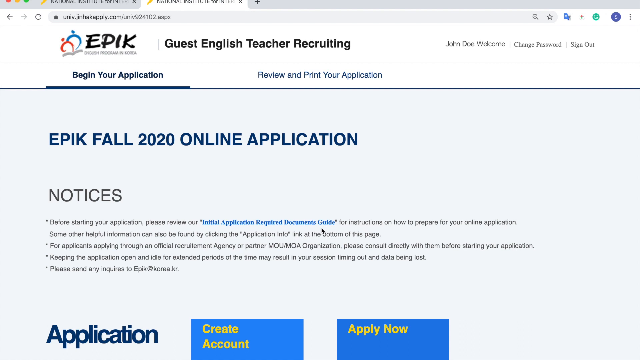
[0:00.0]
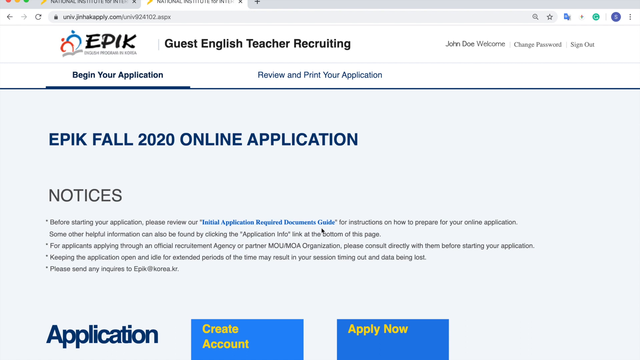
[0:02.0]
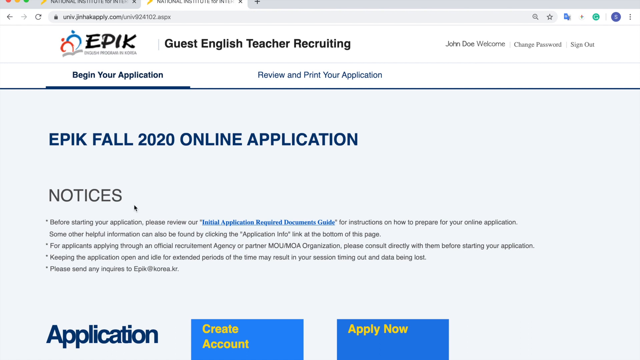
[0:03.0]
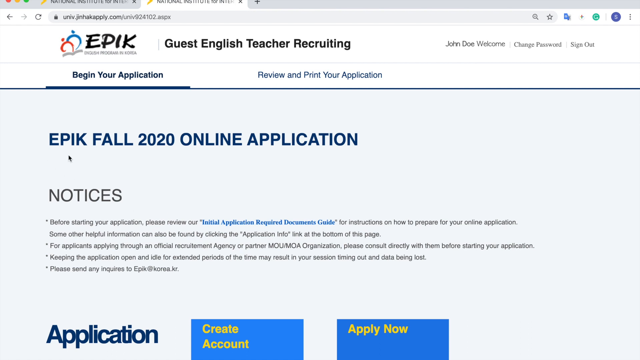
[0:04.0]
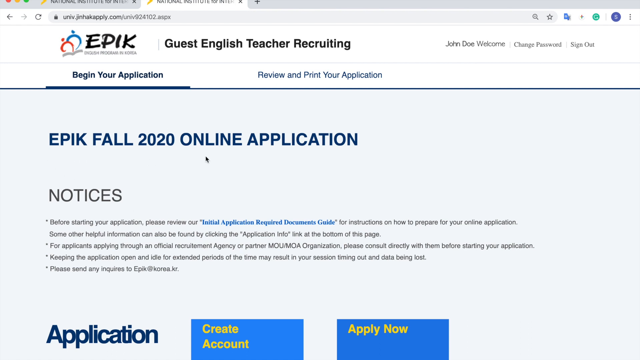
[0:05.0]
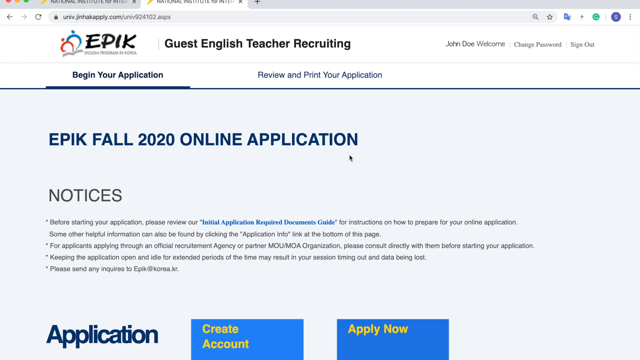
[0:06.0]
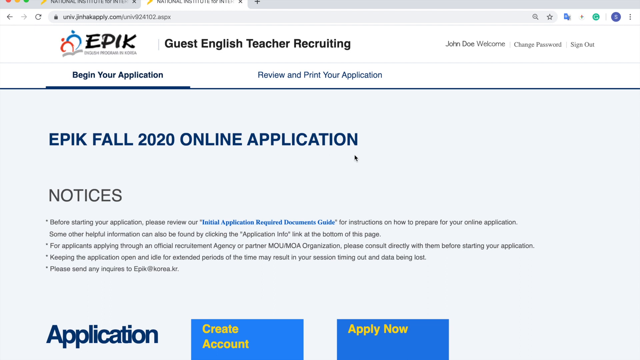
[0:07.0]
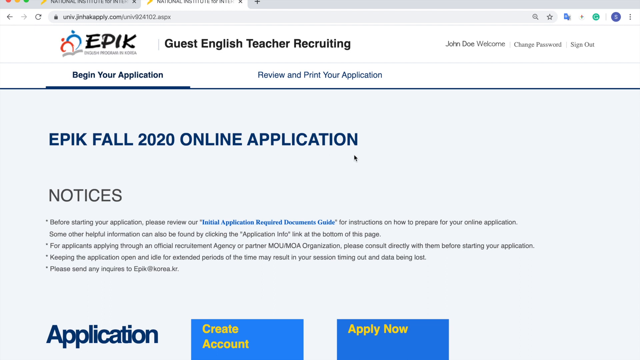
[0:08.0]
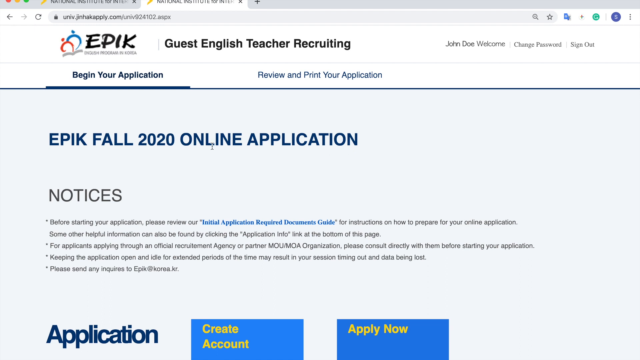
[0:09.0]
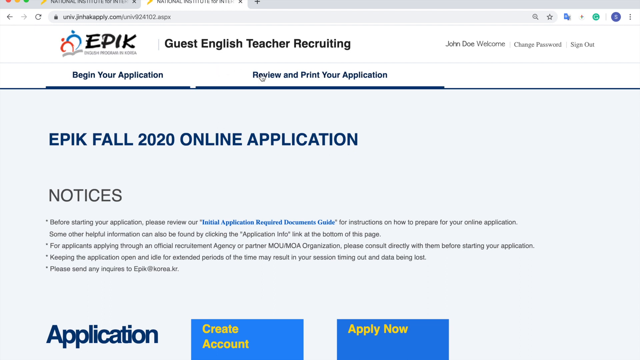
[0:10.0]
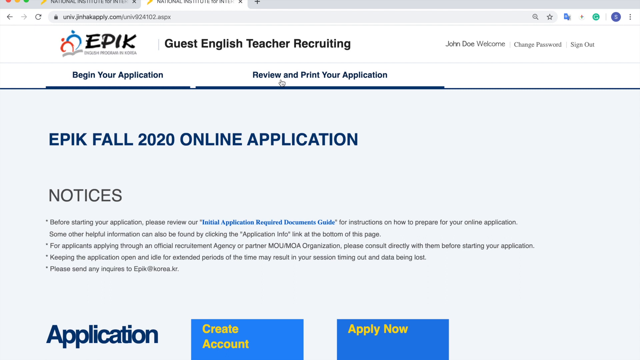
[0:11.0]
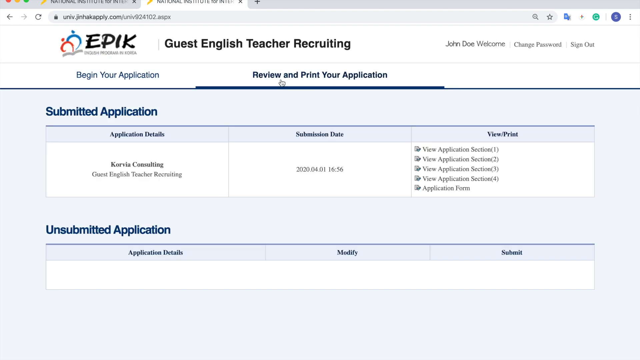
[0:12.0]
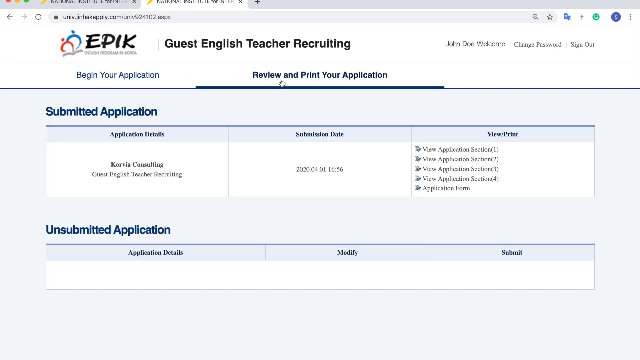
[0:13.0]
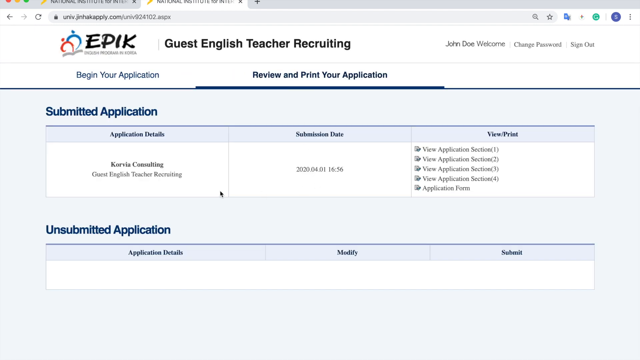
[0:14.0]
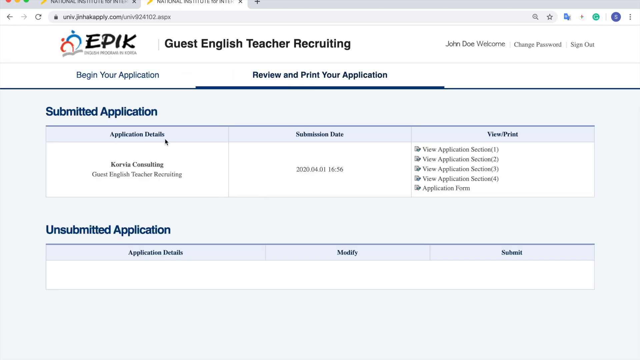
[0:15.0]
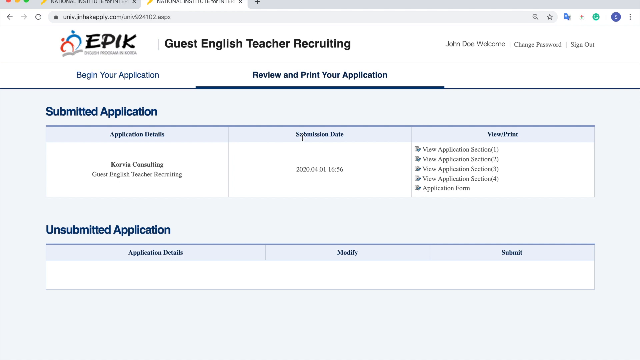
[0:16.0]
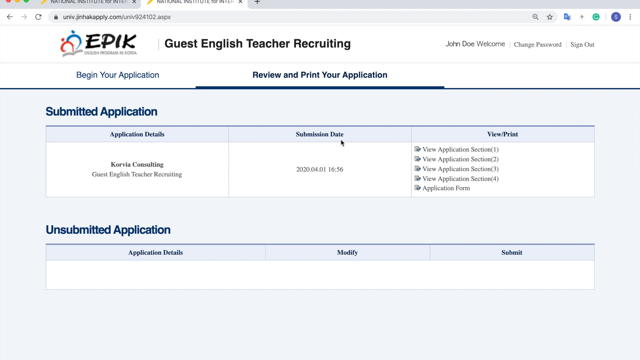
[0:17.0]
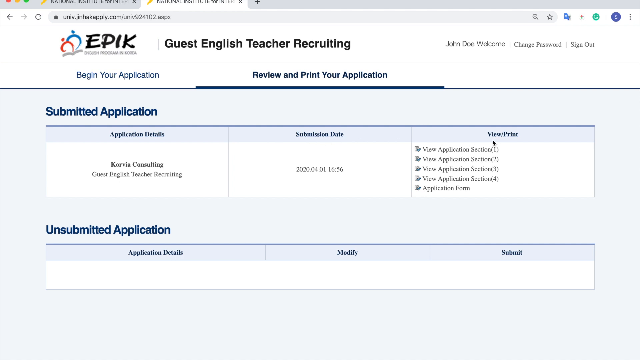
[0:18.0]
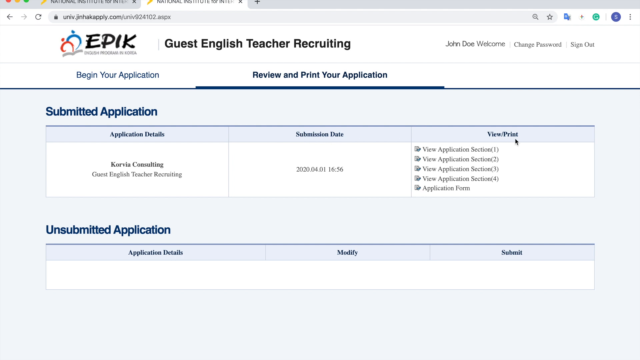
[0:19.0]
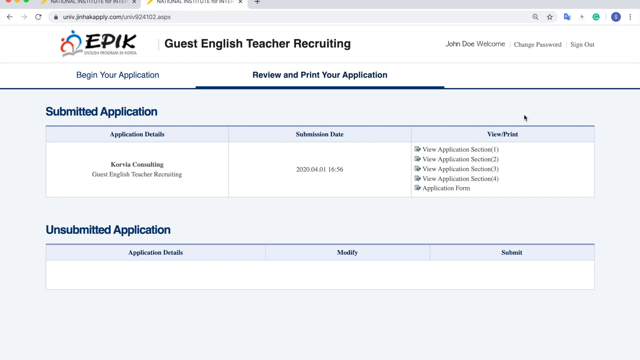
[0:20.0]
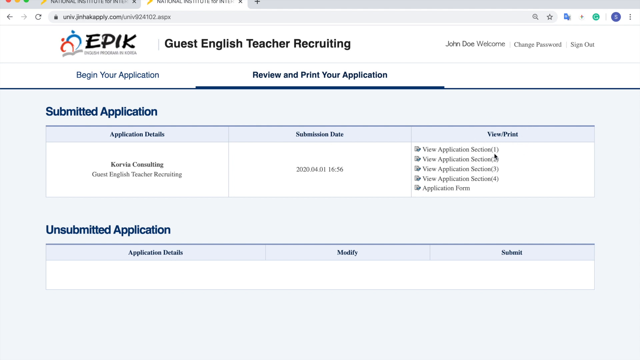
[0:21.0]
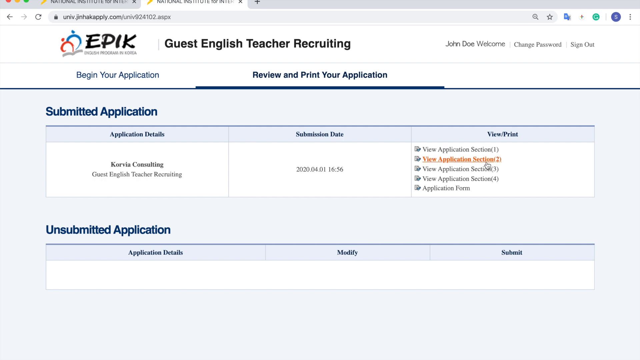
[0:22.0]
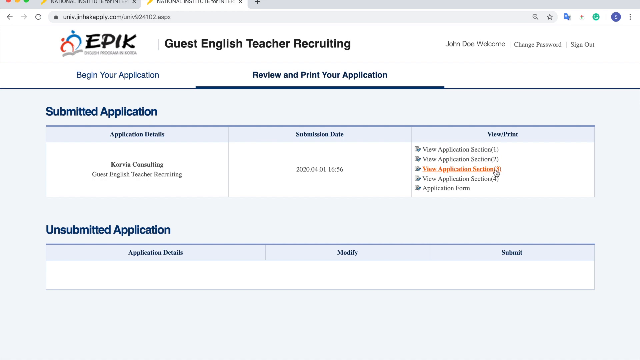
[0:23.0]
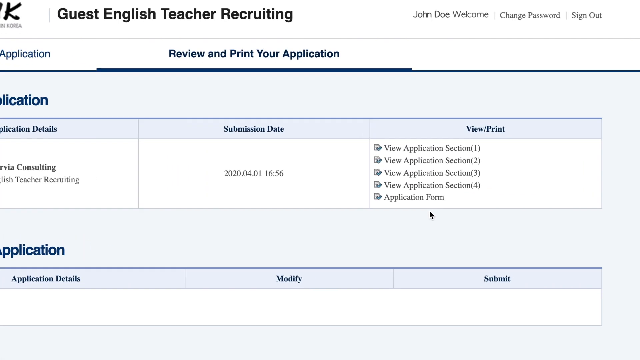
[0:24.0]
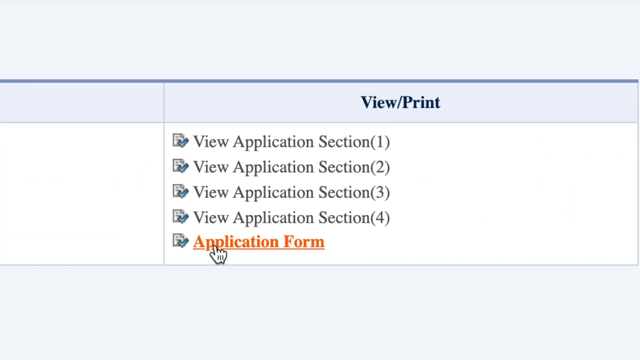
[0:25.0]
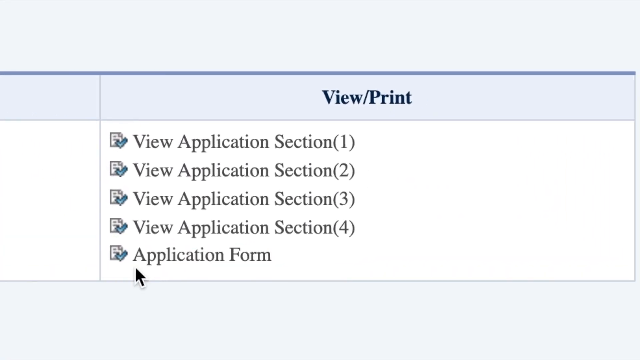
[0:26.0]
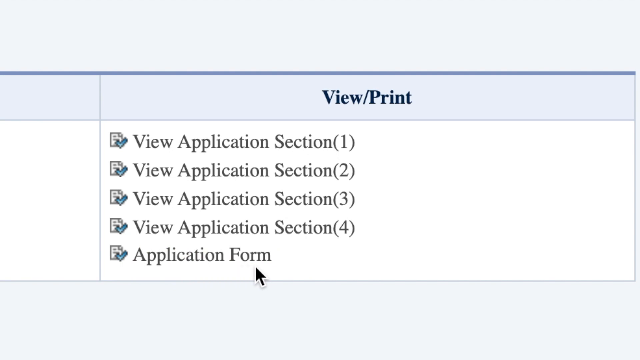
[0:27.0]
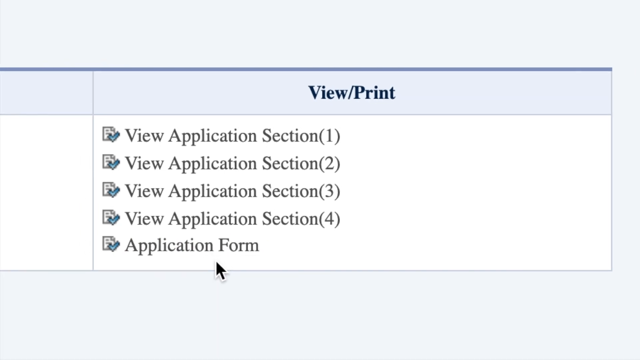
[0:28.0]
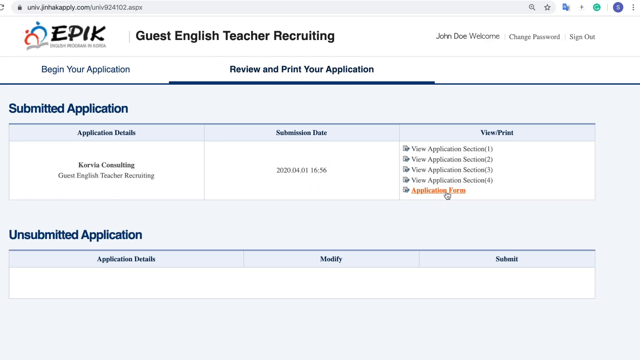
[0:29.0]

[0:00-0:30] The video begins on a web page. At the top left, in black, is "EPIK", and to its right, in bold black letters, "Guest English Teacher Recruiting". Further right are "John", "Go", "Welcome", "Change Password" and "Sign Out". Beneath these are two tabs, "Begin Your Application" and "Review and Print Your Application", and the "Begin Your Application" tab is open. The page is titled "EPIK Fall 2020 Online Application". A notice reads: "Before starting your application, please review our Initial Application Required Documents Guide for instructions on how to prepare your online applications. For other helpful information, also can be found by clicking Application Info link at the bottom of this page. For applicants applying through an official recruitment agency or partner, please consult directly with them before starting your application."